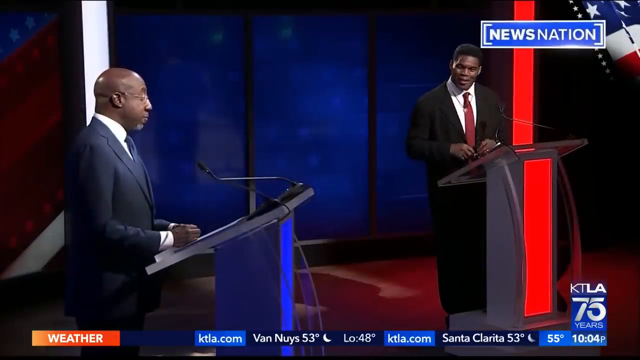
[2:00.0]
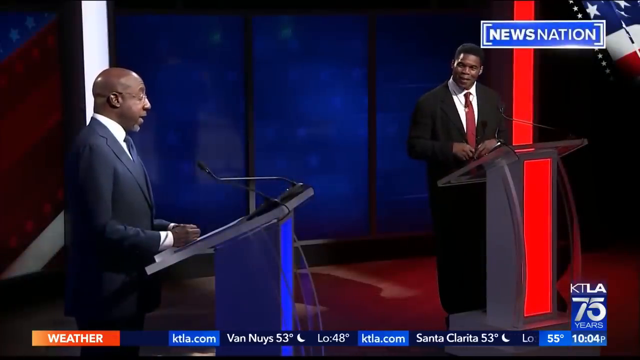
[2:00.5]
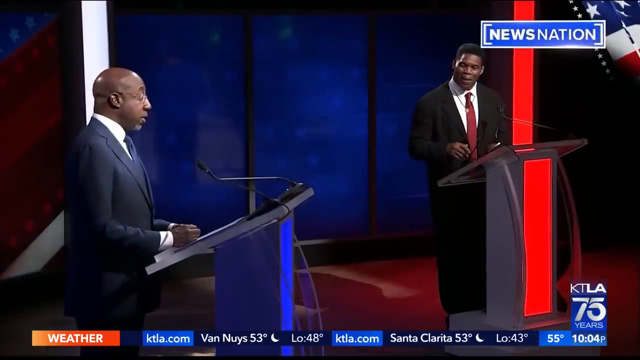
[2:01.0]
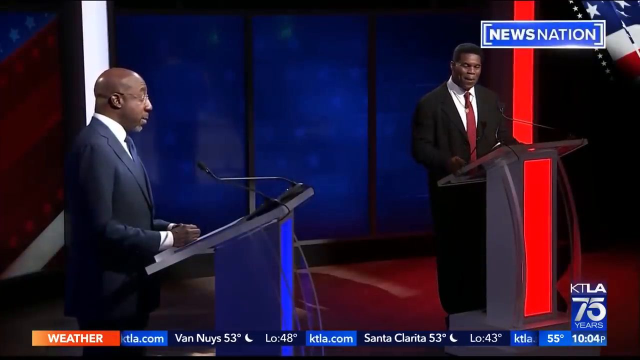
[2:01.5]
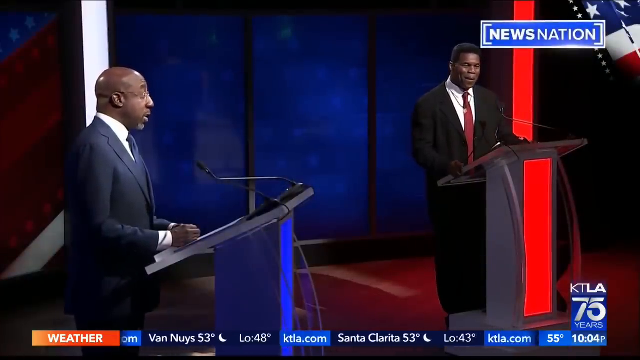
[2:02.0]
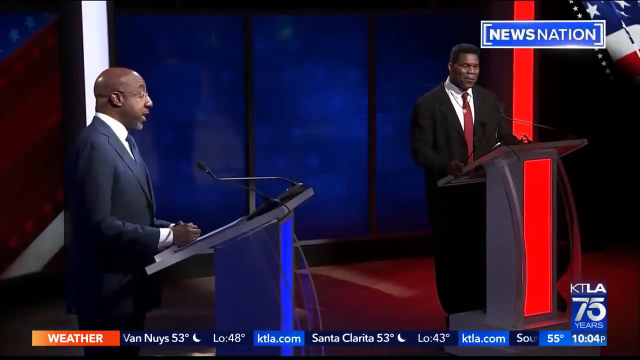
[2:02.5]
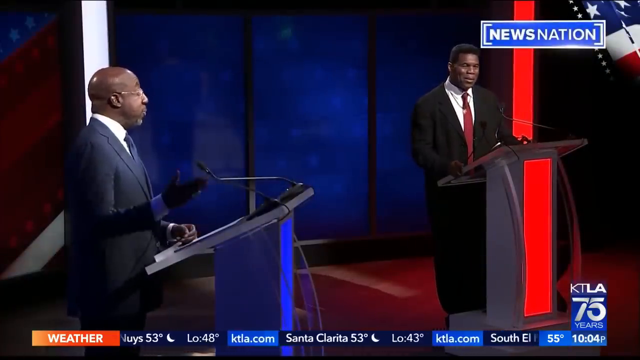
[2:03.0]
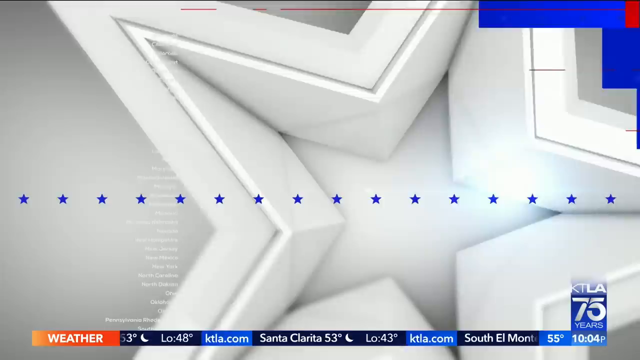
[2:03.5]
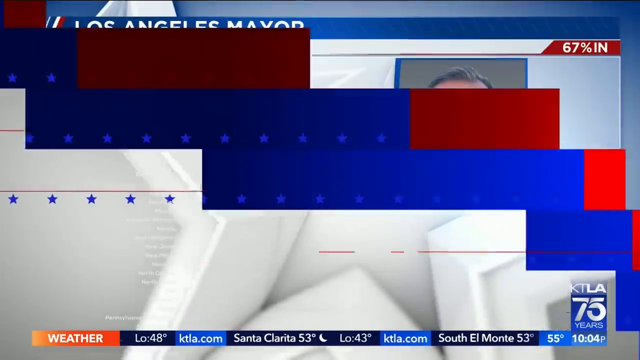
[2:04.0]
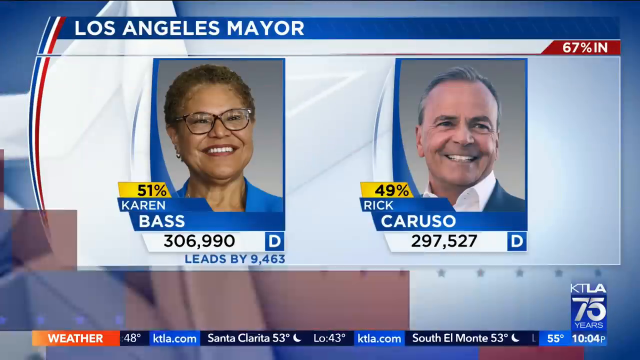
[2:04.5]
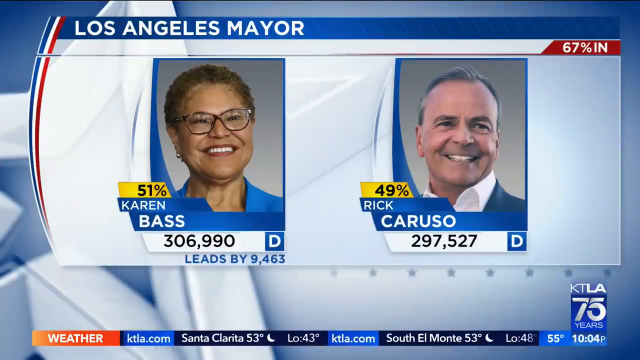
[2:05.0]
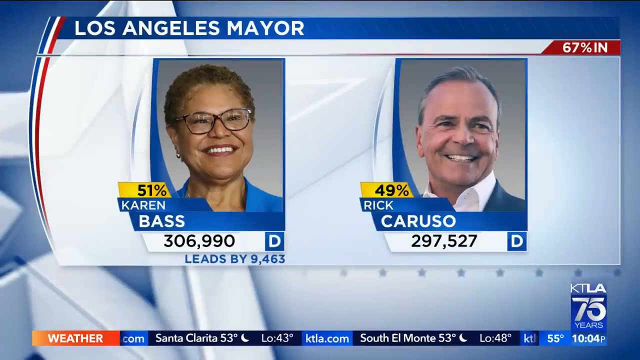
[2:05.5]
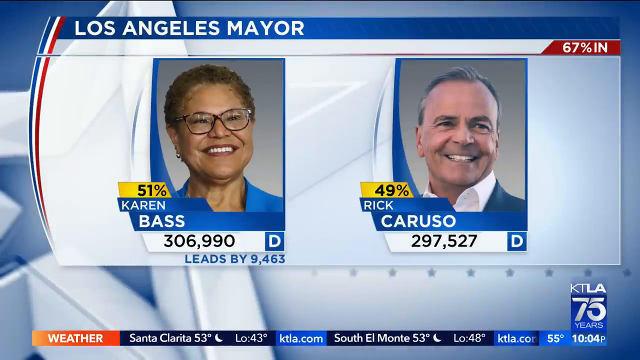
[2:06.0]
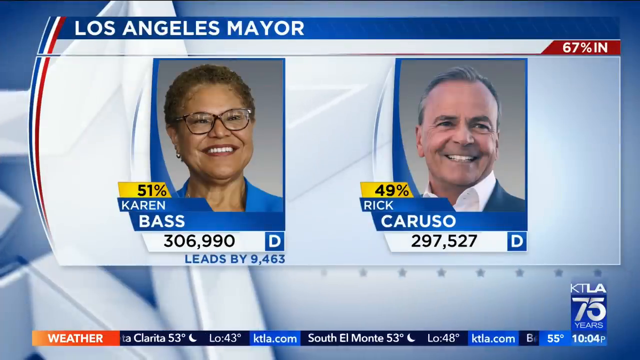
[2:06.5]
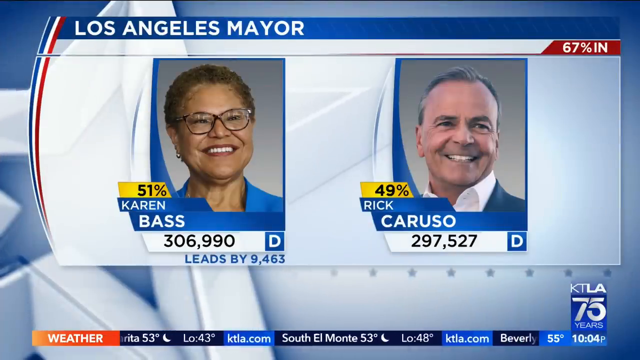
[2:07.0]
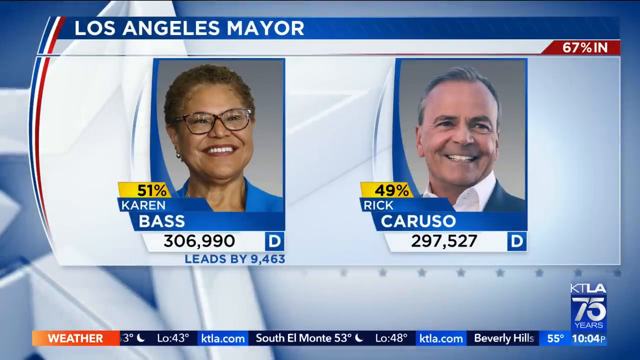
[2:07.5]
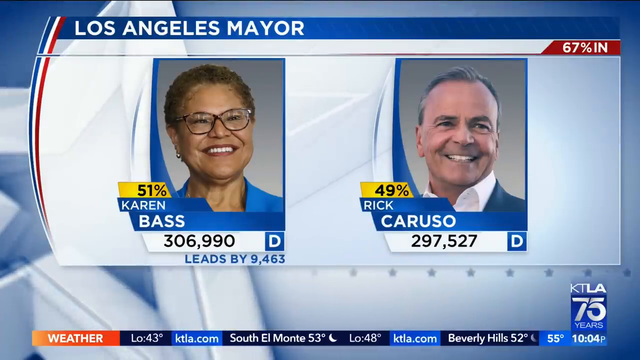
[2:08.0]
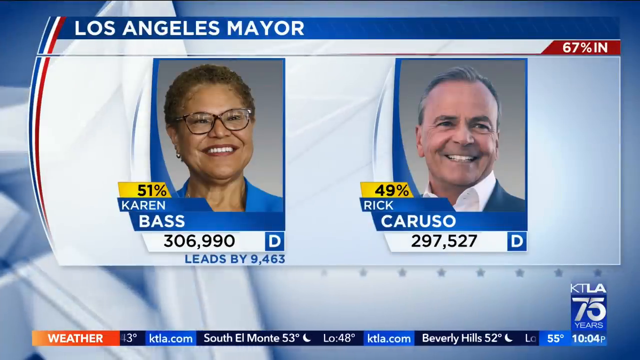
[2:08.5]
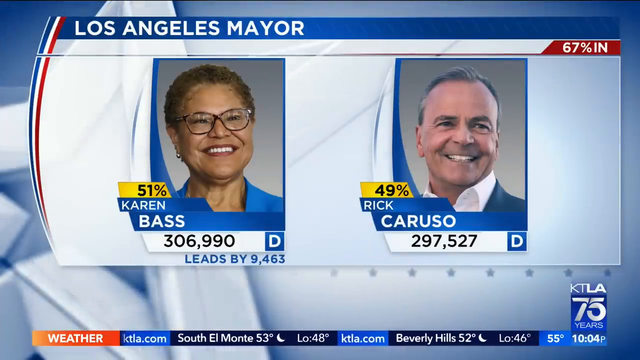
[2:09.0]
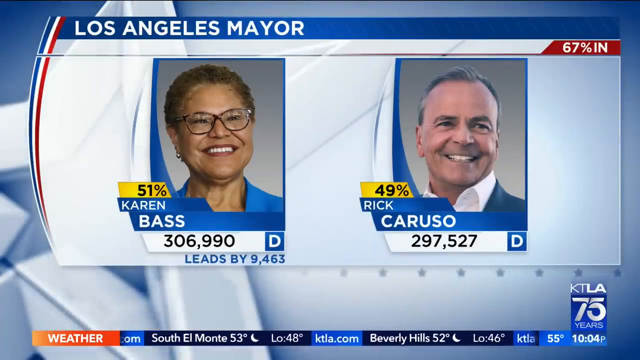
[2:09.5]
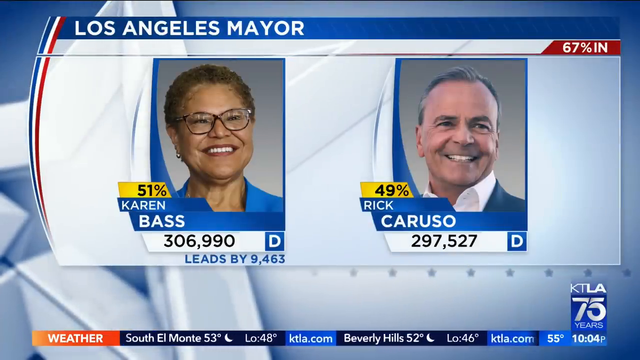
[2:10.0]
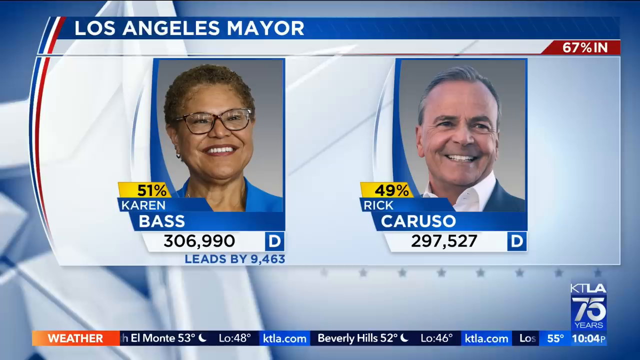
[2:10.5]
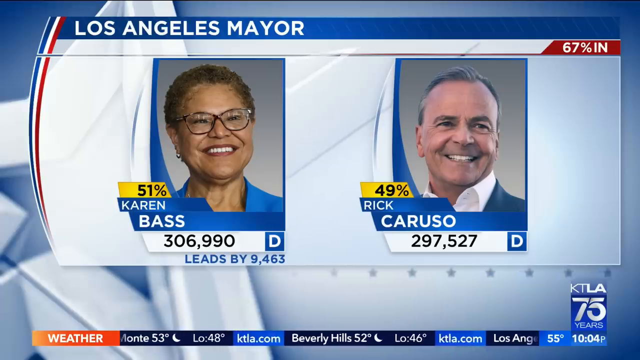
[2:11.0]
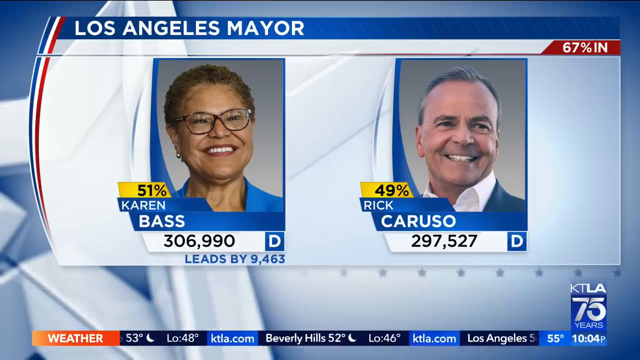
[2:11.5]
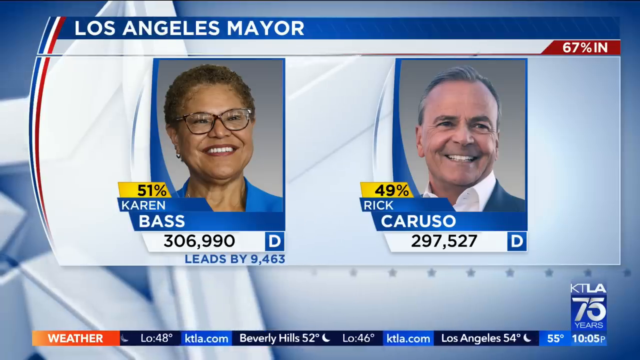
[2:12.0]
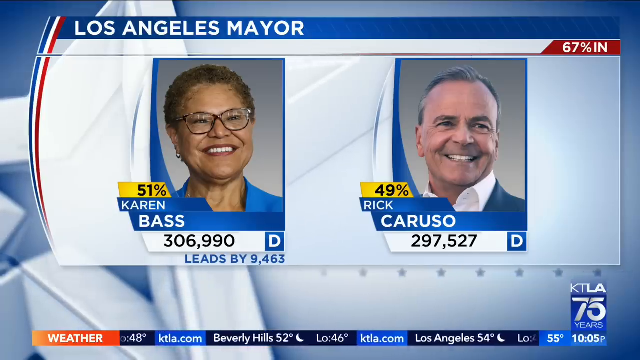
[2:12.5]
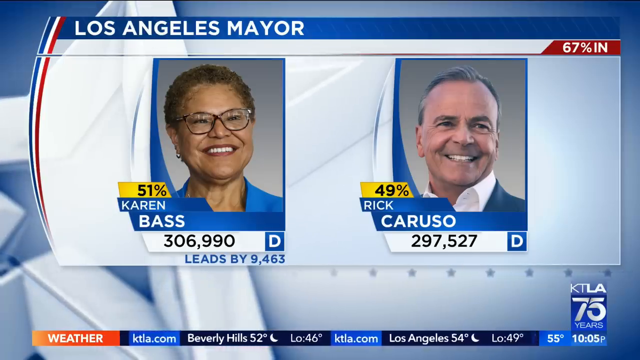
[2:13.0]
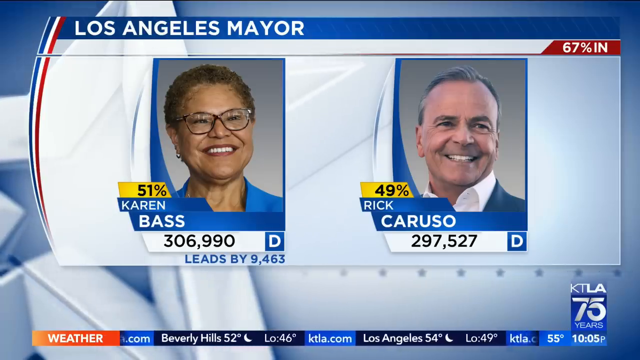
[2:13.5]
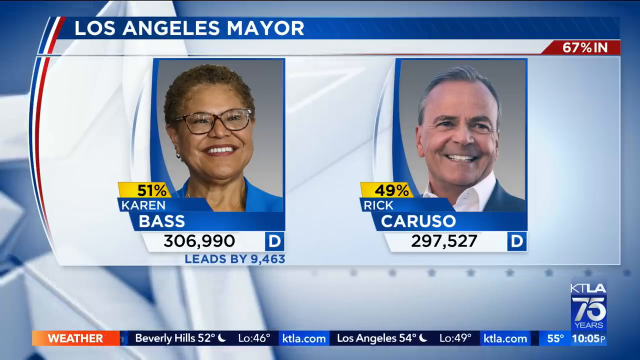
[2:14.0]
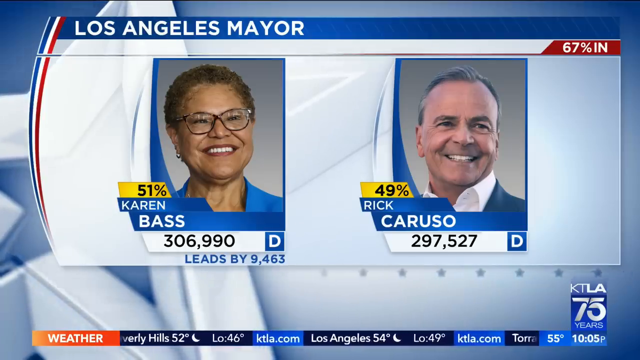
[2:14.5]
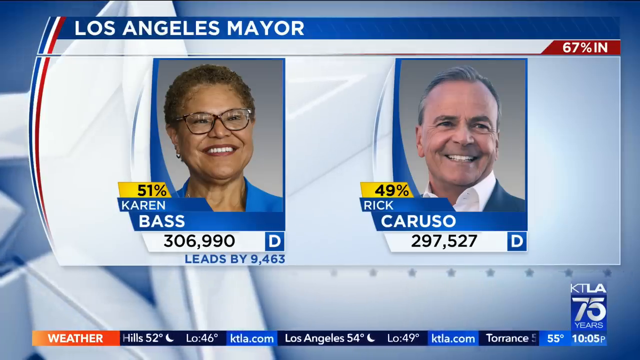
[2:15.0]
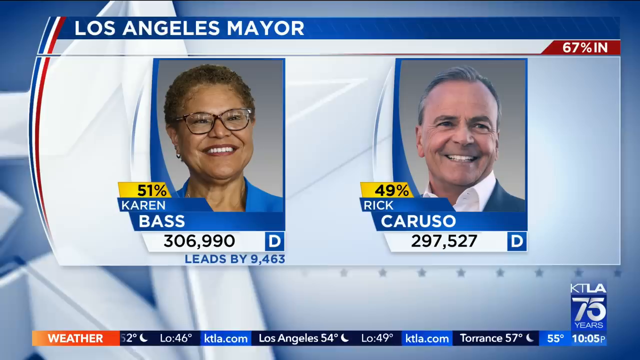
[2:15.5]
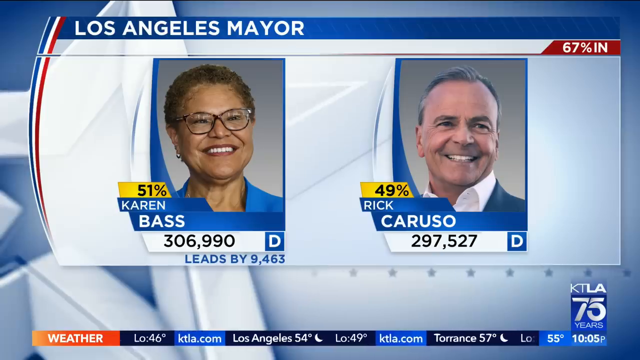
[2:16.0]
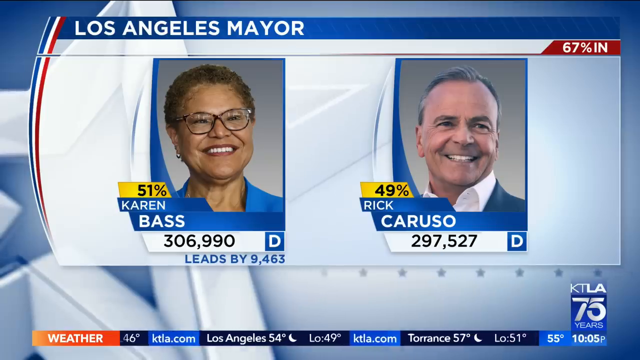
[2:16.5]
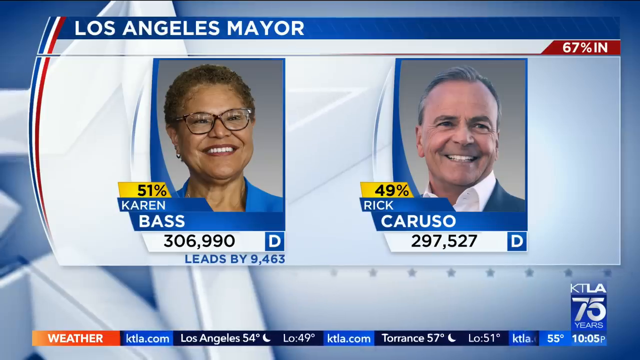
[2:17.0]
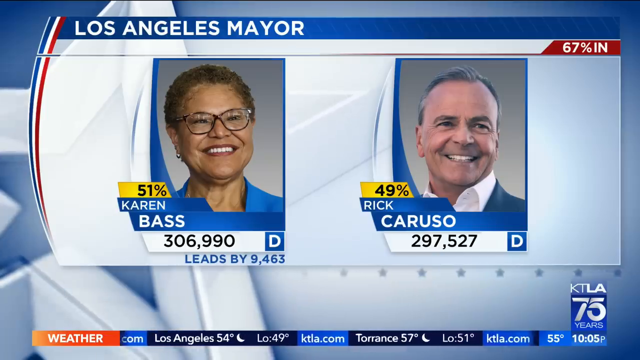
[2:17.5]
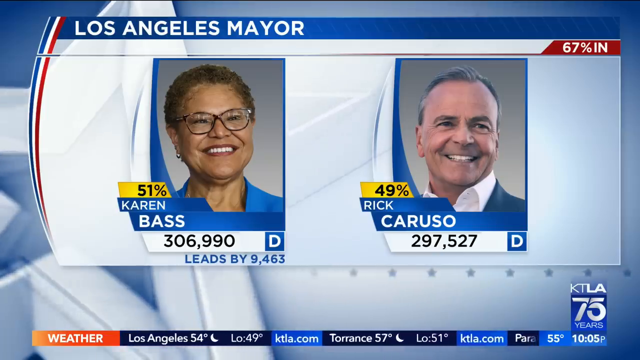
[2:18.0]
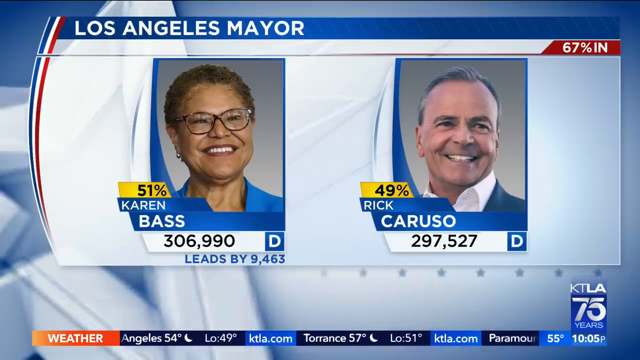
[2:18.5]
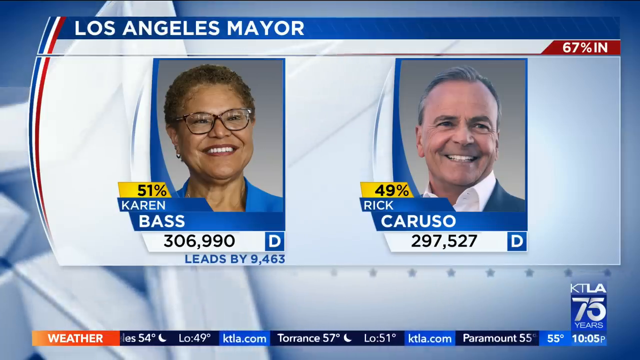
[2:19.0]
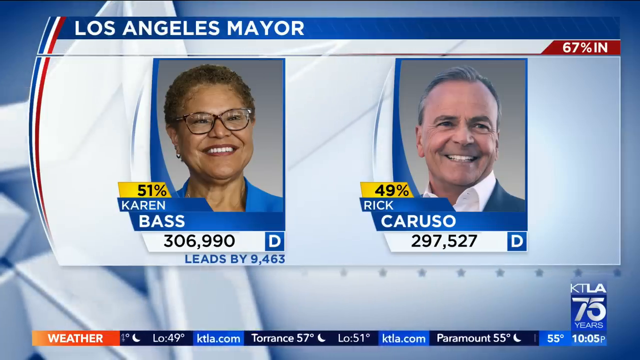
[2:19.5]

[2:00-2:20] The footage starts with what looks like a logo or part of a logo, then moves to Bass versus Caruso in the Los Angeles mayoral election, as part of further KTLA 75 election coverage.